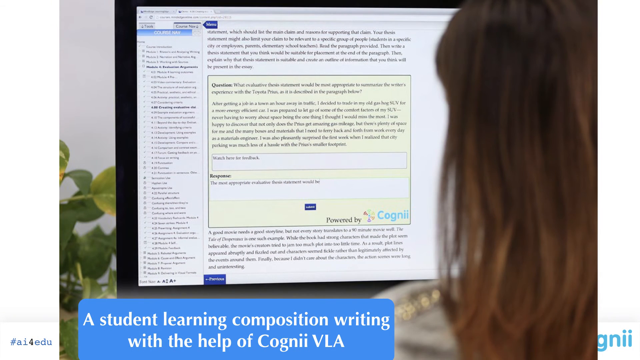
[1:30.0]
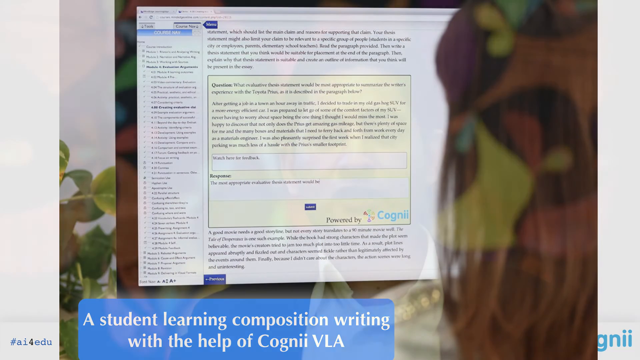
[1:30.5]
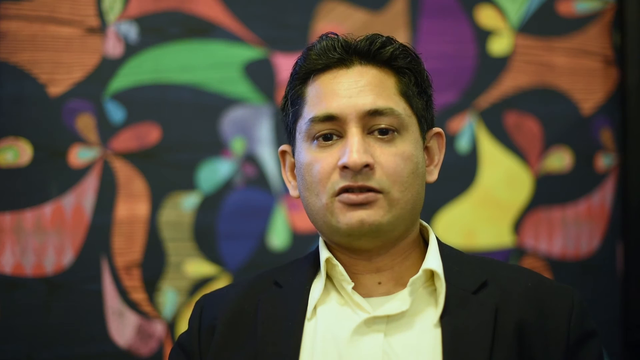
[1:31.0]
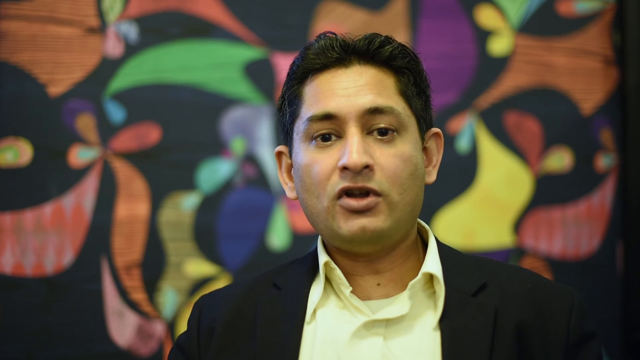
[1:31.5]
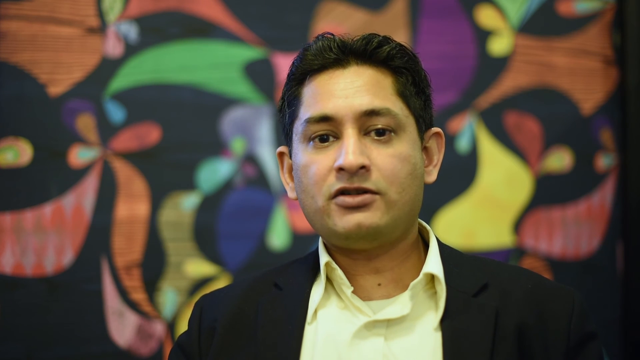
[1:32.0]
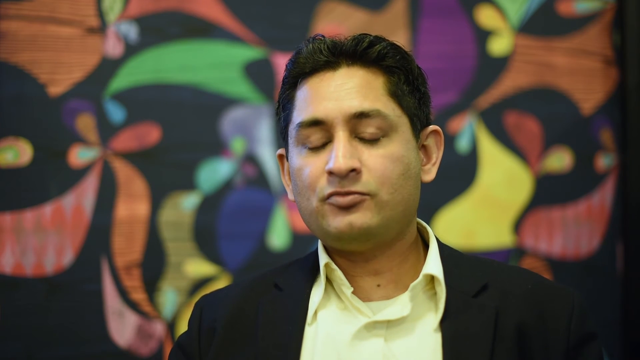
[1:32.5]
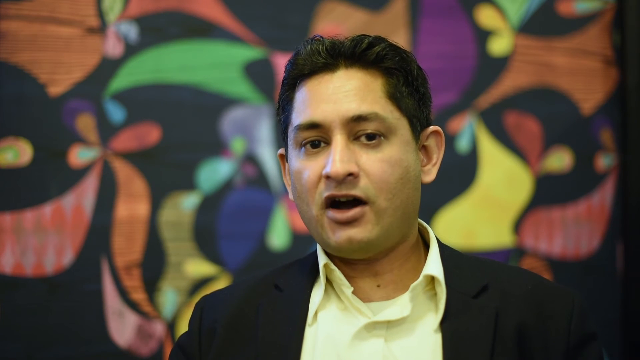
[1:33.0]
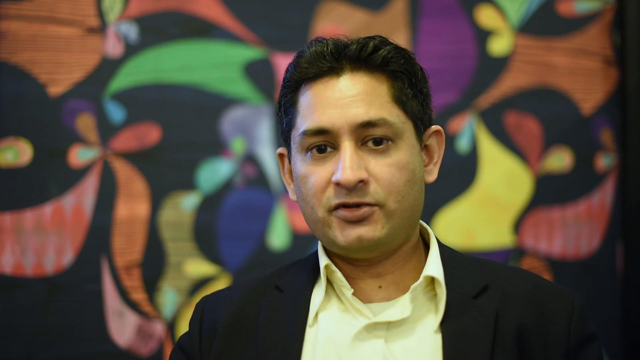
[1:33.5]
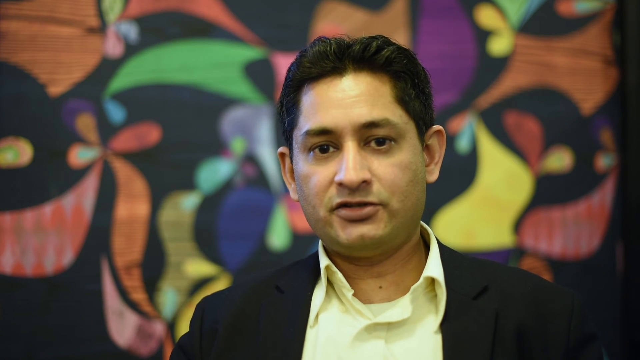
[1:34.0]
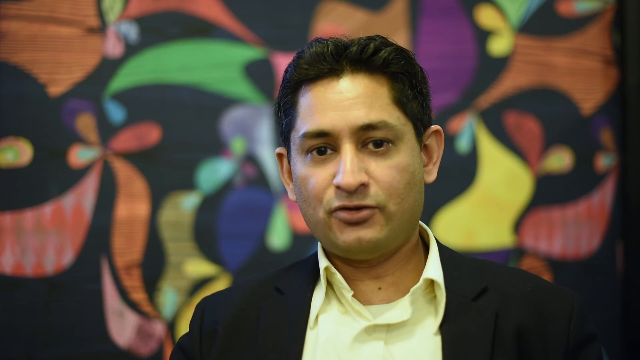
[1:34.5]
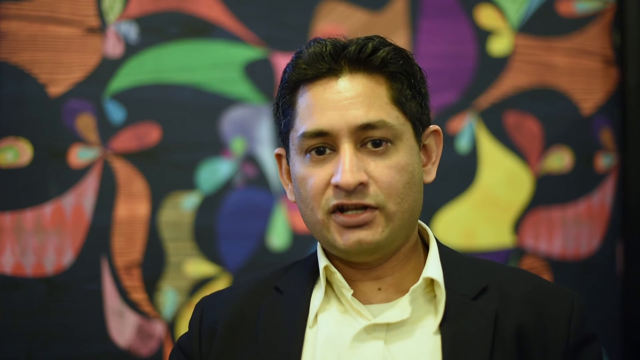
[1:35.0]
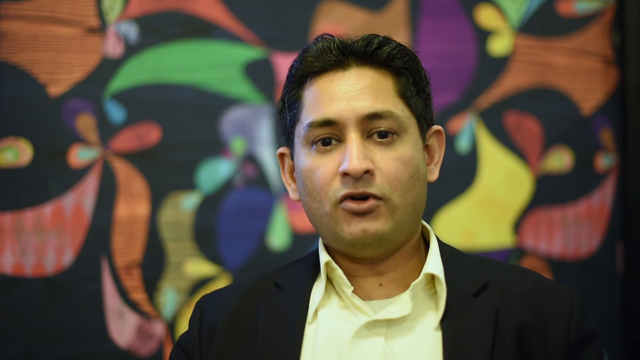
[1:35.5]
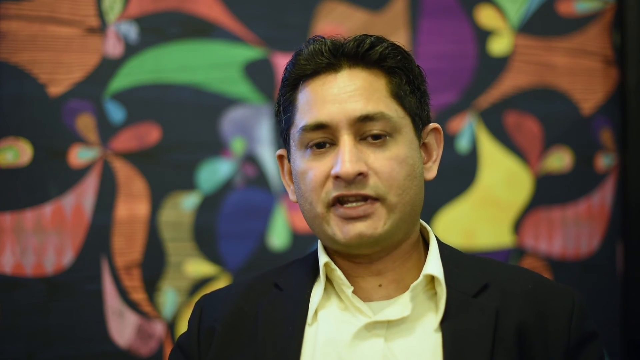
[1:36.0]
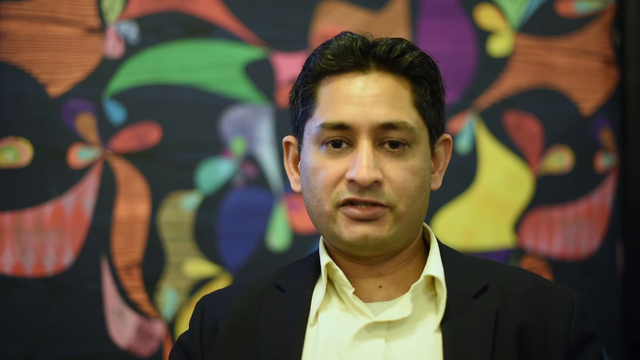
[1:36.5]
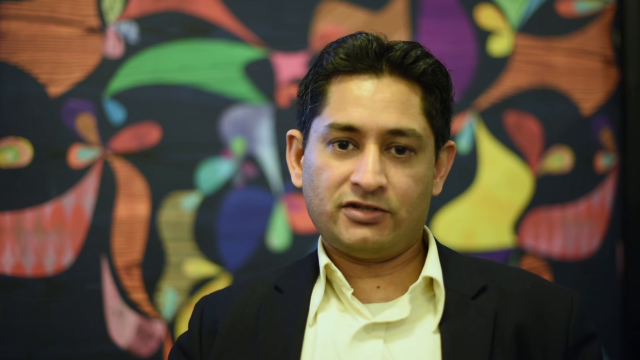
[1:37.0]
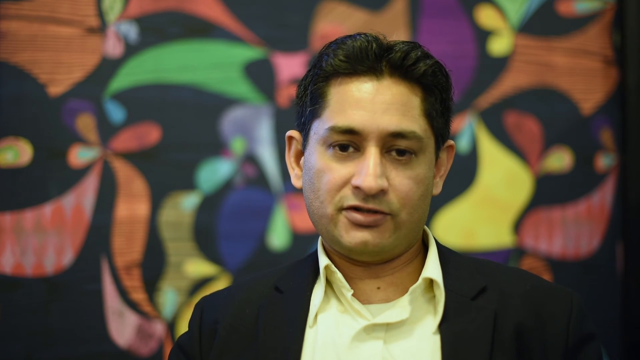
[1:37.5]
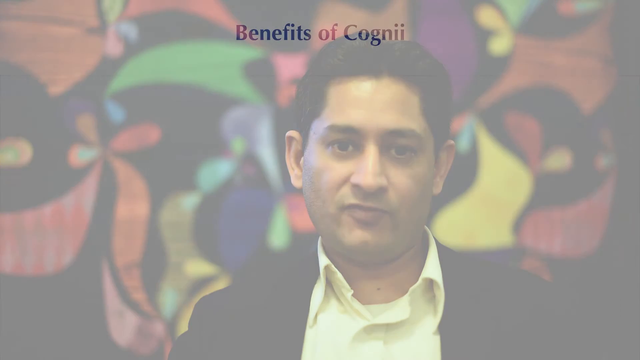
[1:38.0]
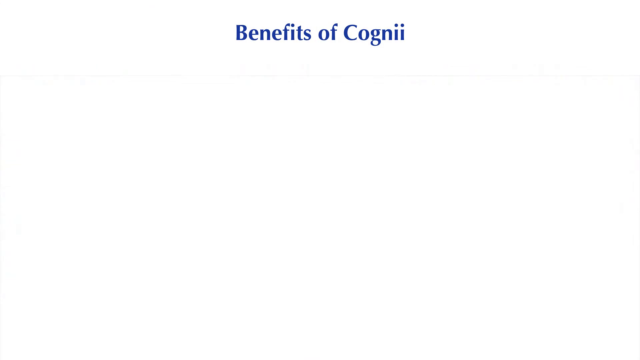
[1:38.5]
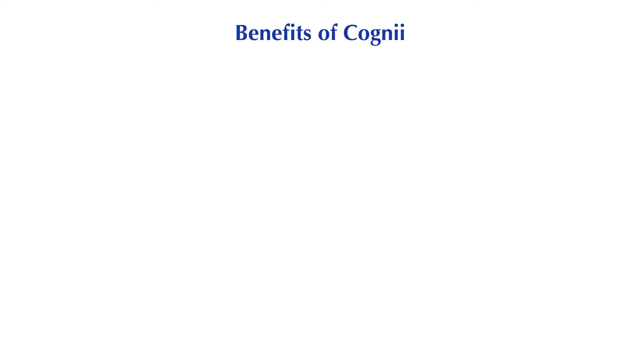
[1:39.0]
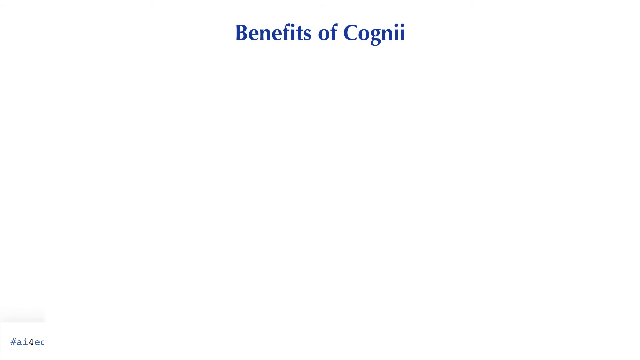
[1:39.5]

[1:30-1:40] The person continues on the same topic, student learning composition or writing with the help of AI.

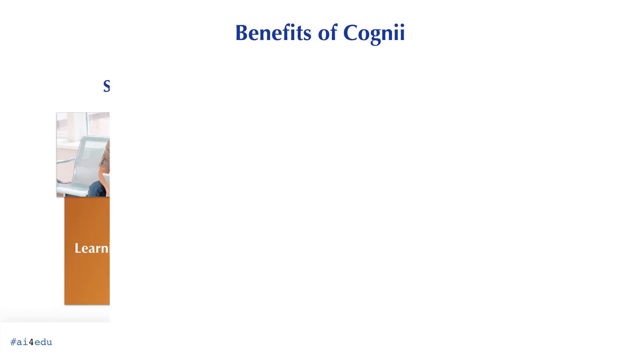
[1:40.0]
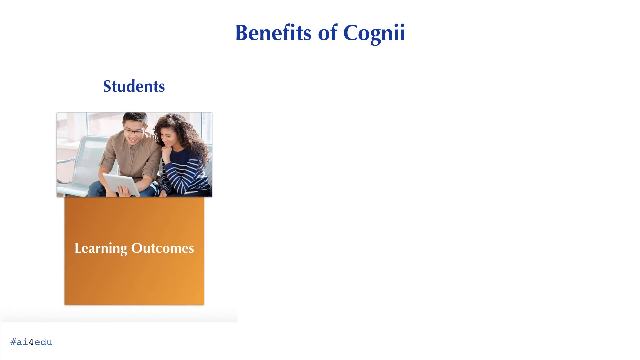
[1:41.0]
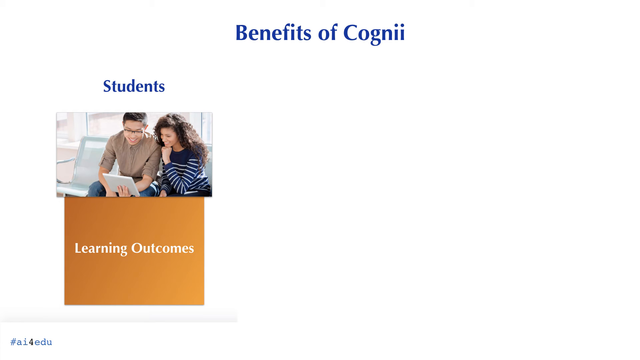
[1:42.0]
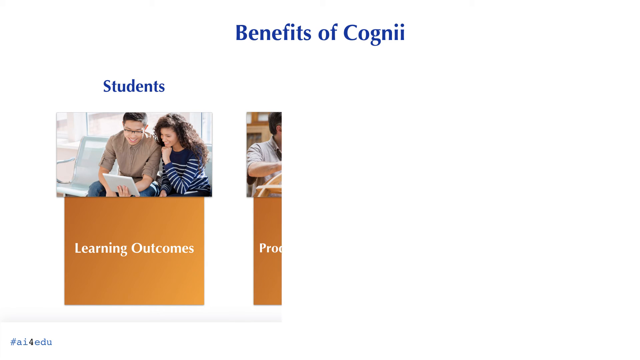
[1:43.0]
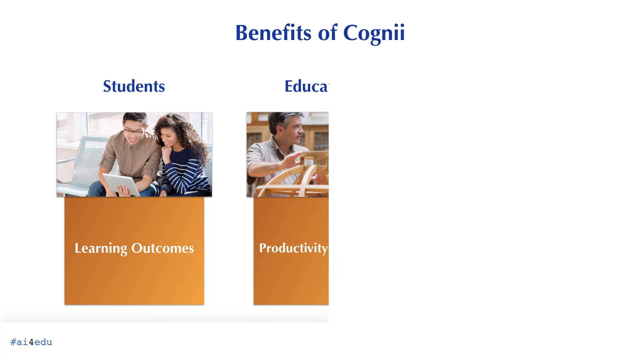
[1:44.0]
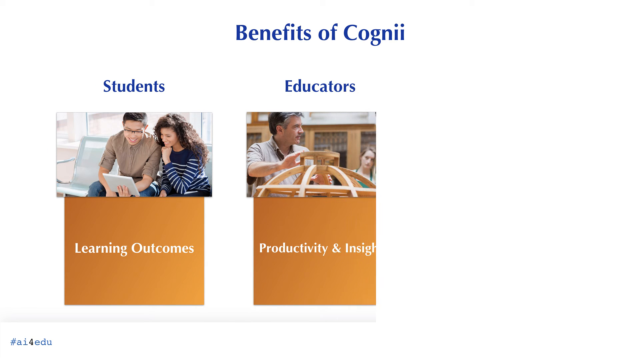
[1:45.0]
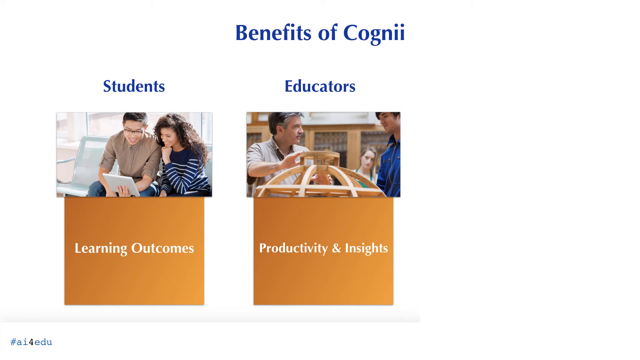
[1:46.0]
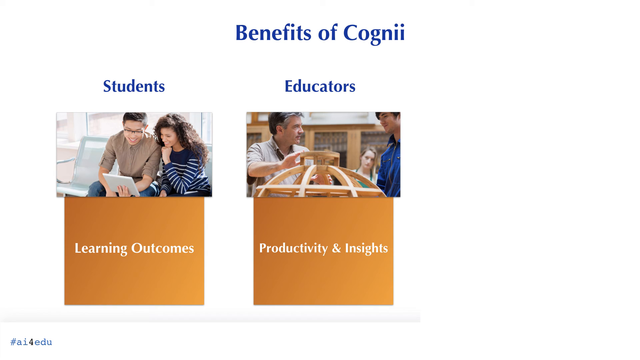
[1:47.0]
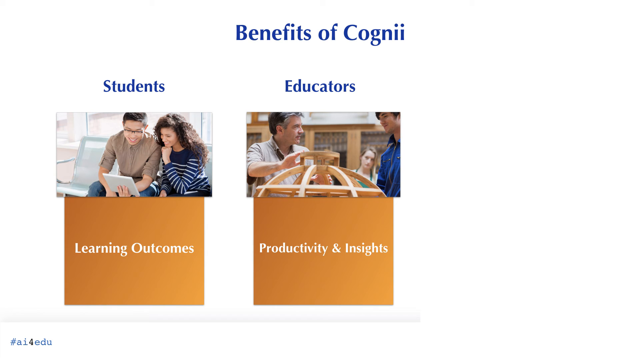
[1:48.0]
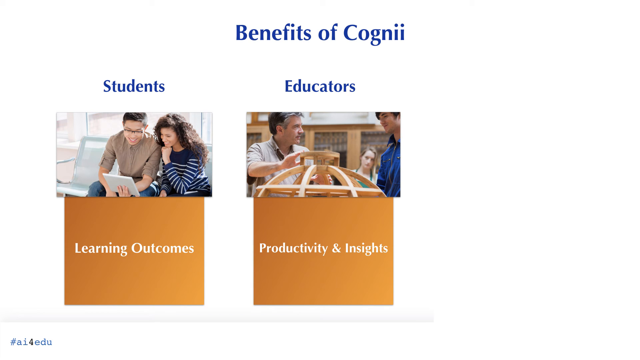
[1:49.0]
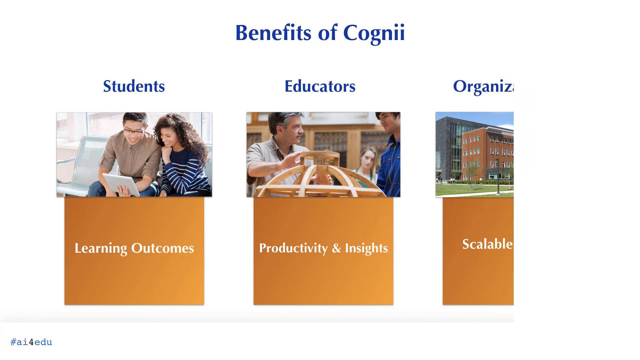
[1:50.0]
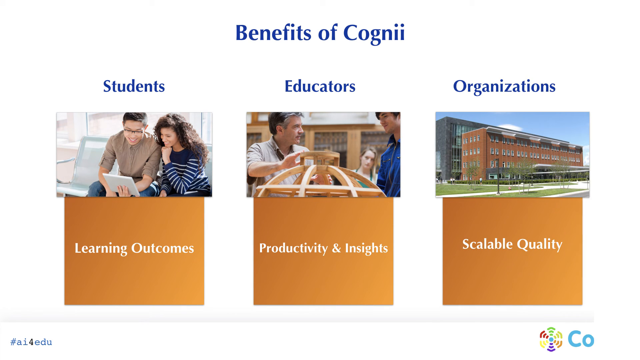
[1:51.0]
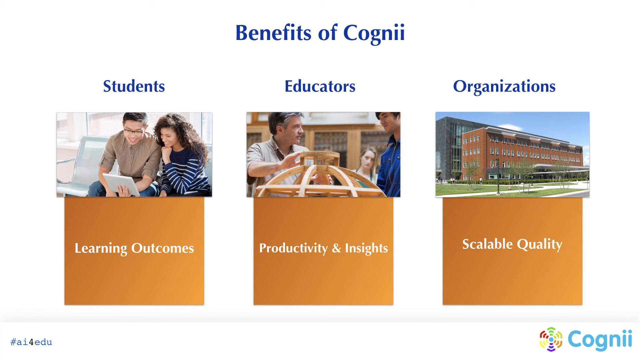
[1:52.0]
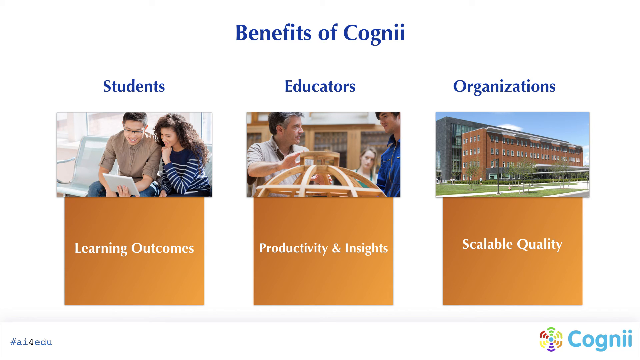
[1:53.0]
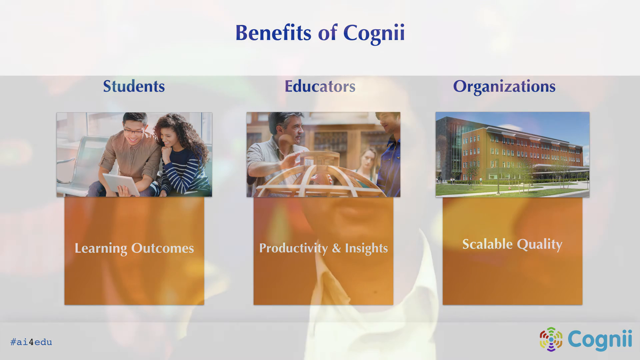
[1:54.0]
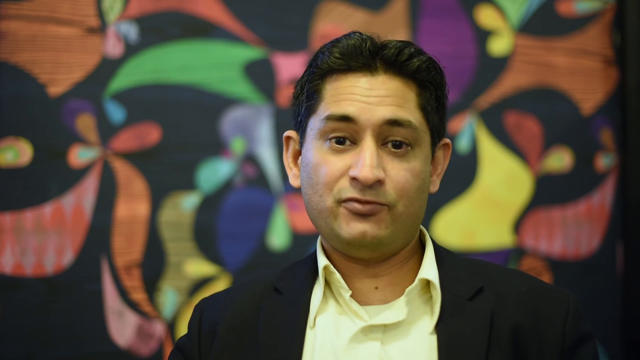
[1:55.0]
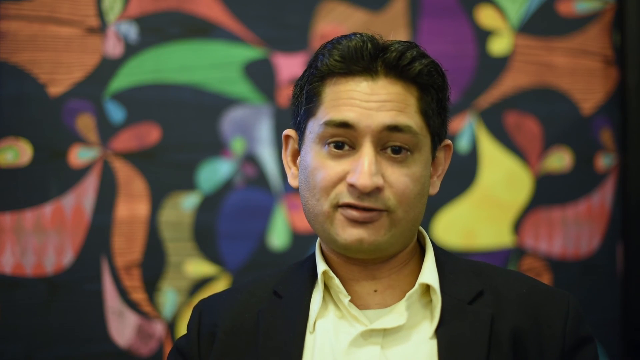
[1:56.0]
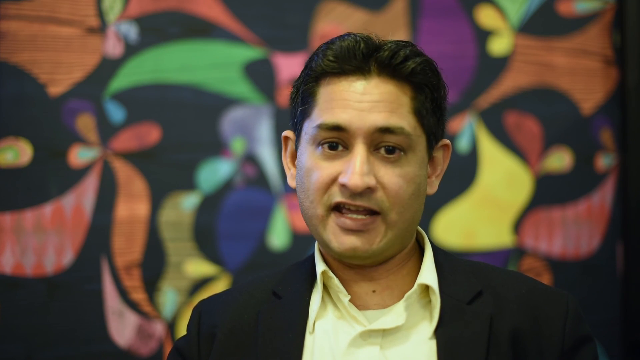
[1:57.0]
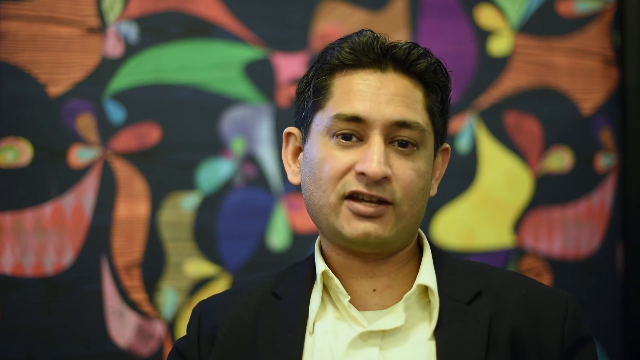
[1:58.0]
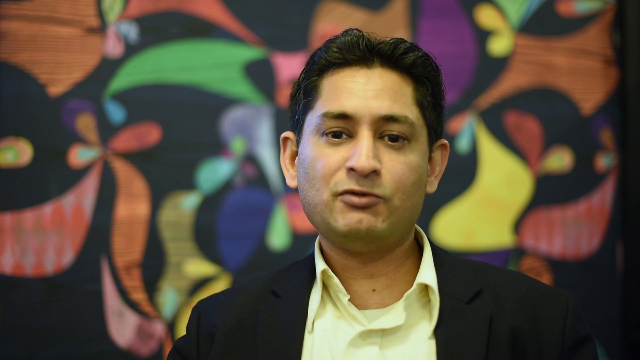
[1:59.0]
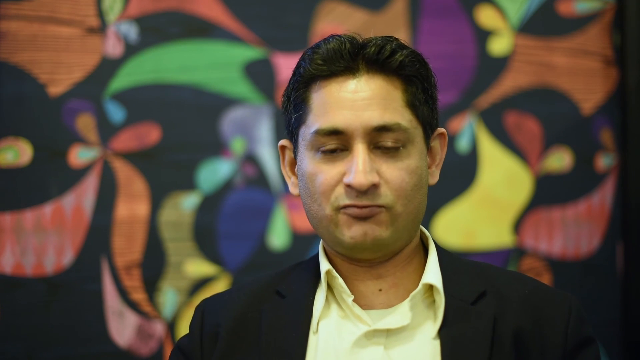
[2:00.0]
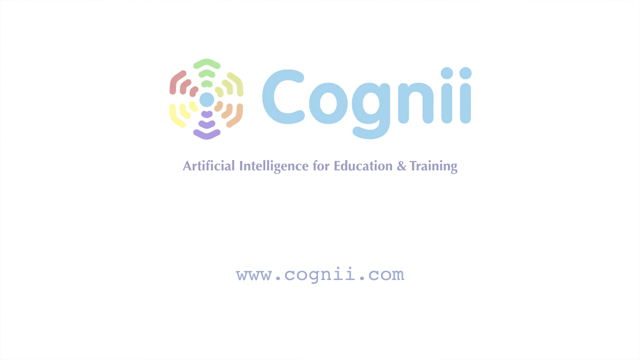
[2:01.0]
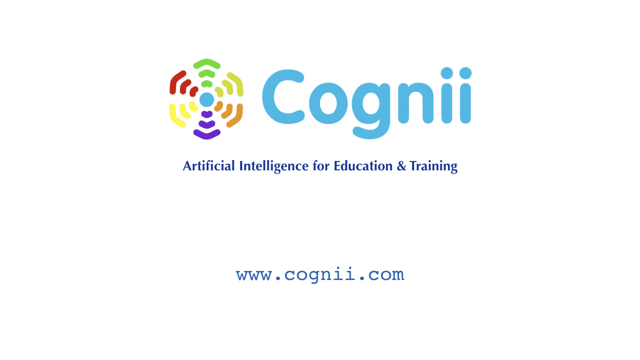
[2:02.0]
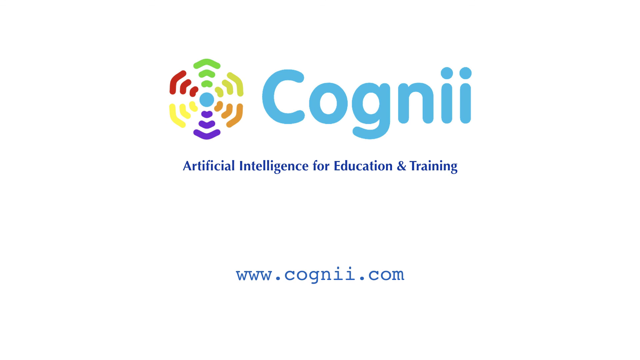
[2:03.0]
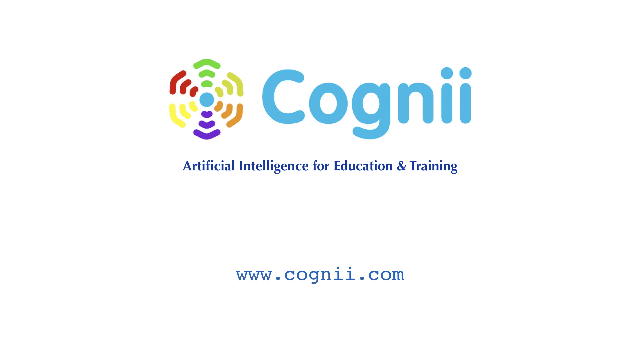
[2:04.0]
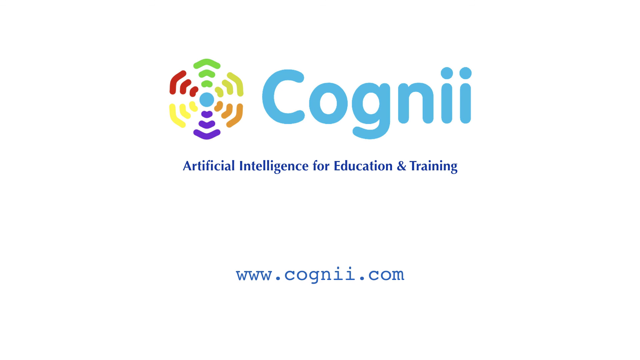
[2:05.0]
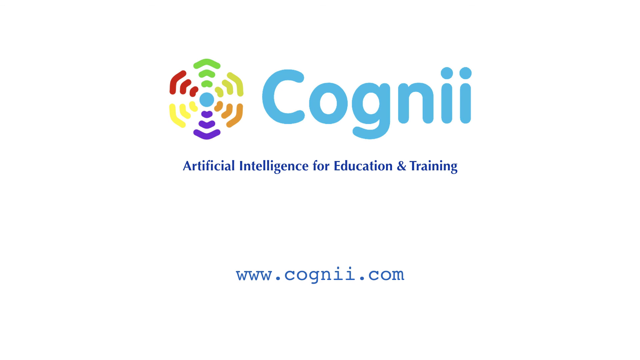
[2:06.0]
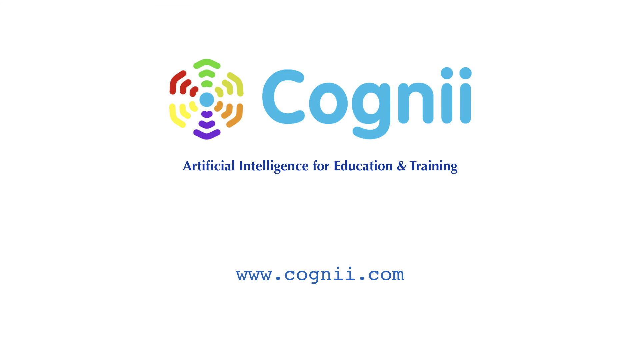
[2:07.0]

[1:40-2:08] Benefits are listed: students for learning outcomes, educators for productivity and insights, and organizations for scalability and quality. Someone who seems to be the chairman of the organization appears, followed by Cogni, Artificial Intelligence for Education and Training, and the website www.cogni.com.